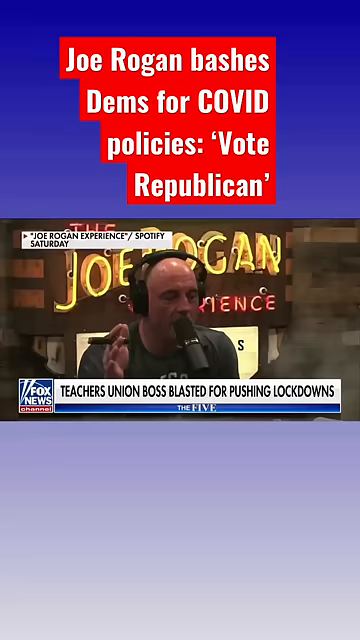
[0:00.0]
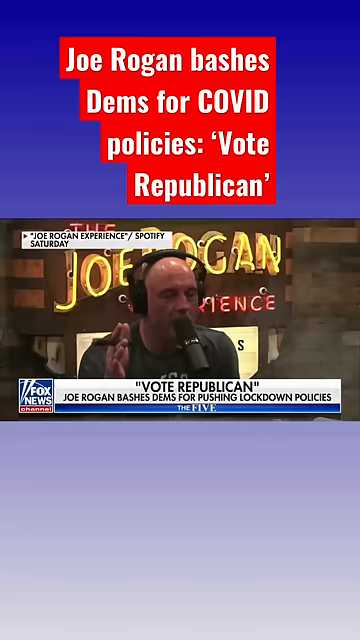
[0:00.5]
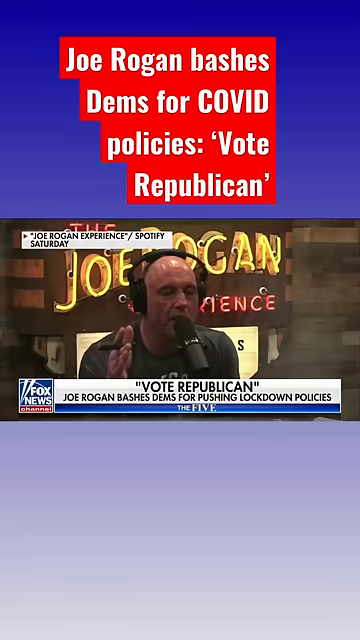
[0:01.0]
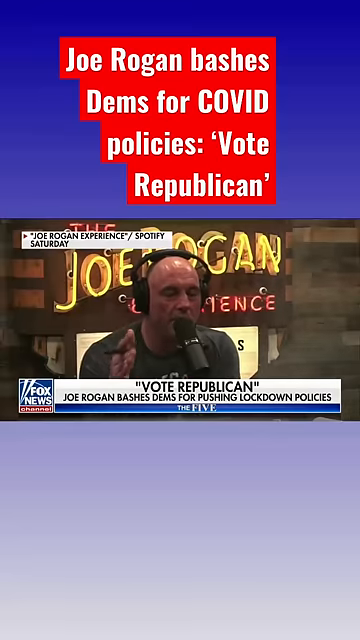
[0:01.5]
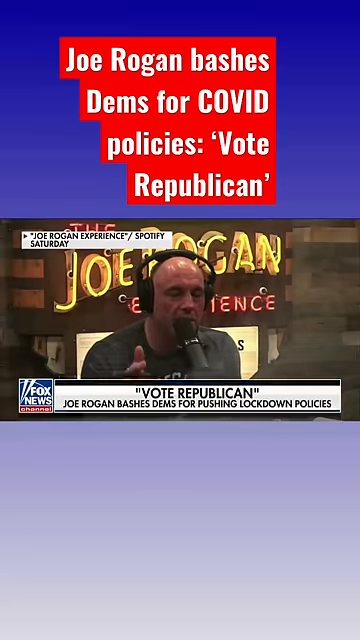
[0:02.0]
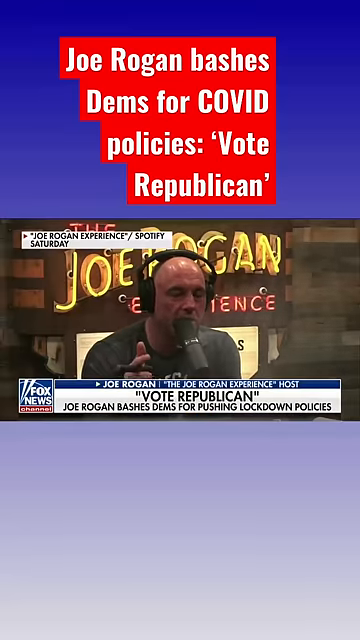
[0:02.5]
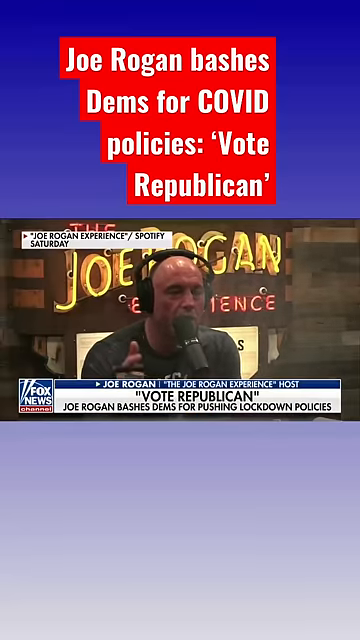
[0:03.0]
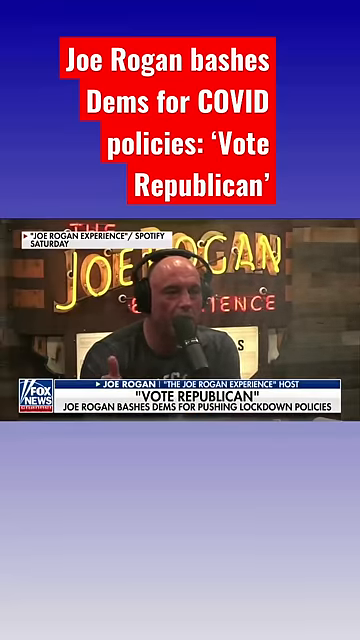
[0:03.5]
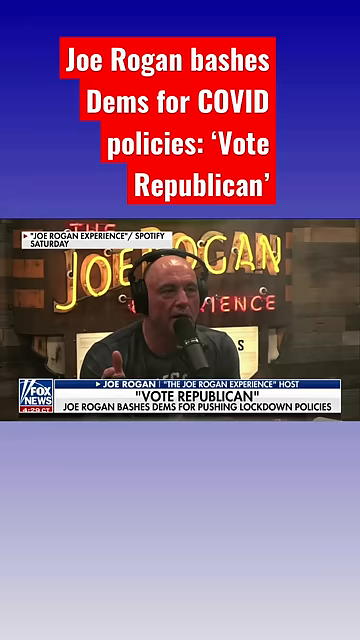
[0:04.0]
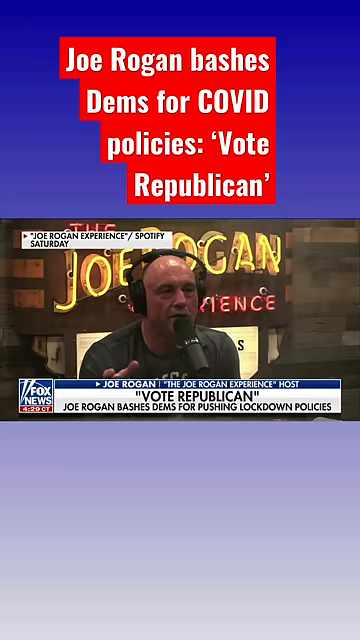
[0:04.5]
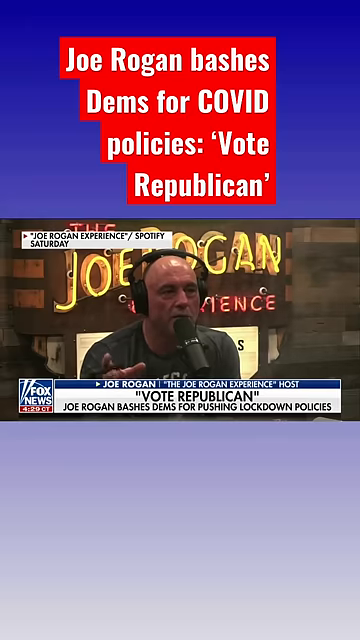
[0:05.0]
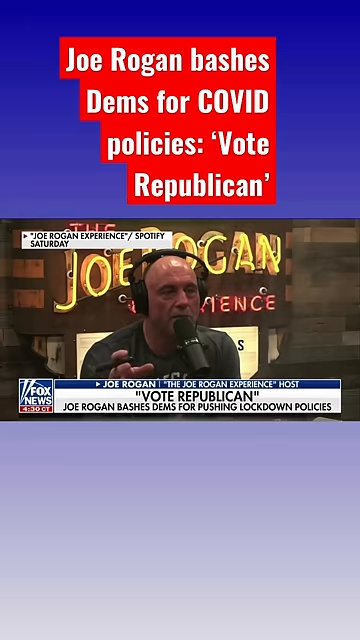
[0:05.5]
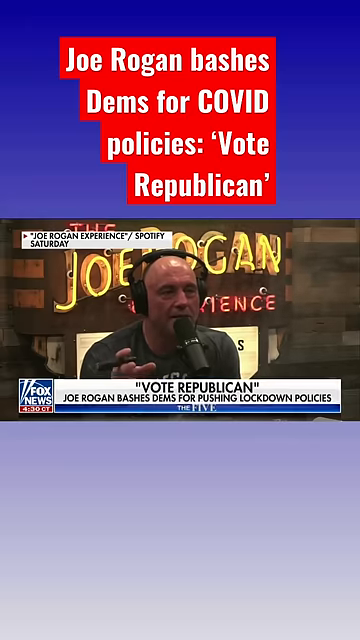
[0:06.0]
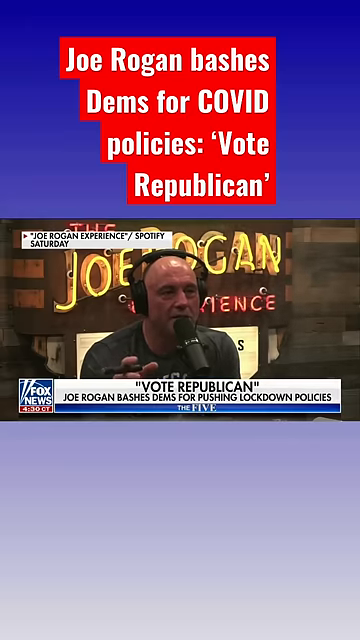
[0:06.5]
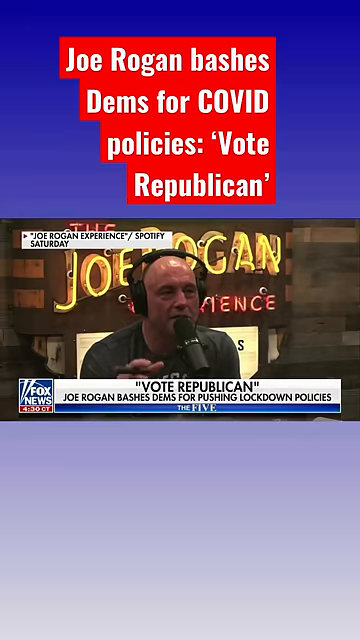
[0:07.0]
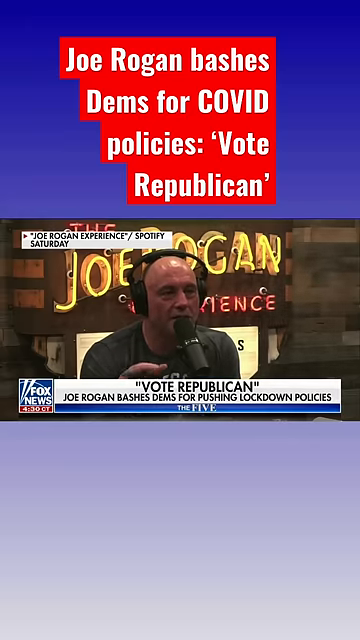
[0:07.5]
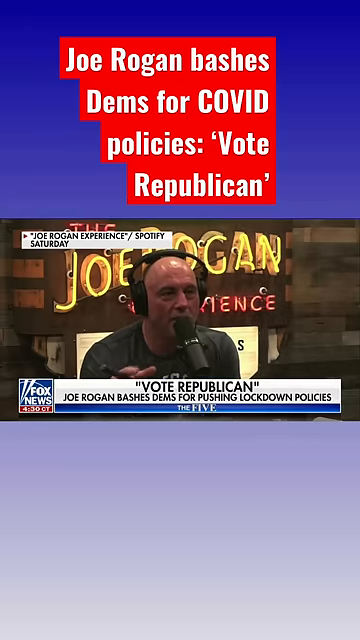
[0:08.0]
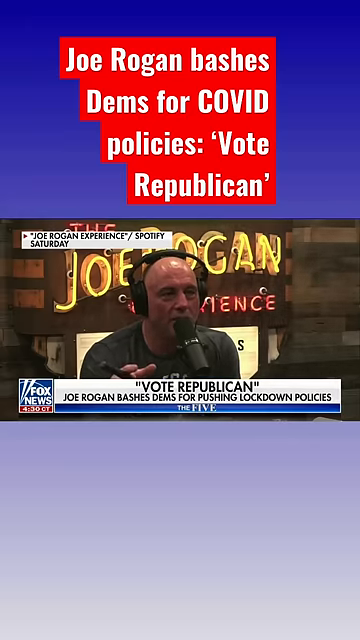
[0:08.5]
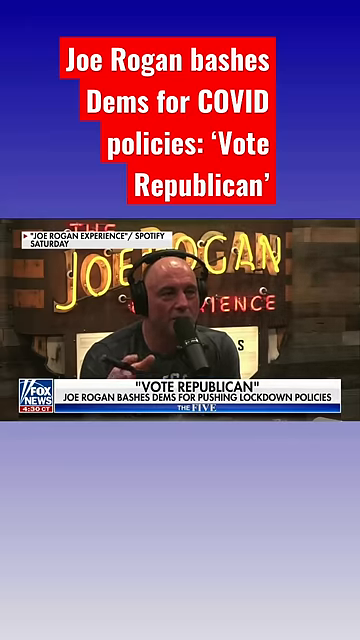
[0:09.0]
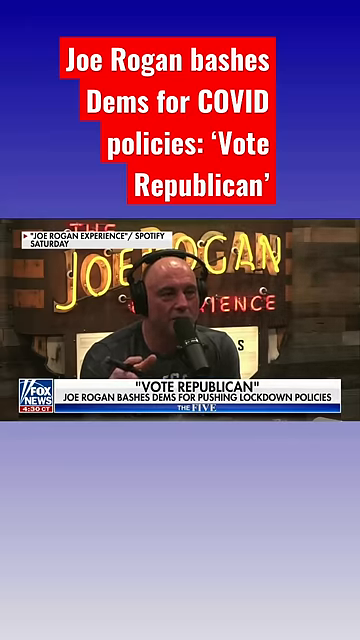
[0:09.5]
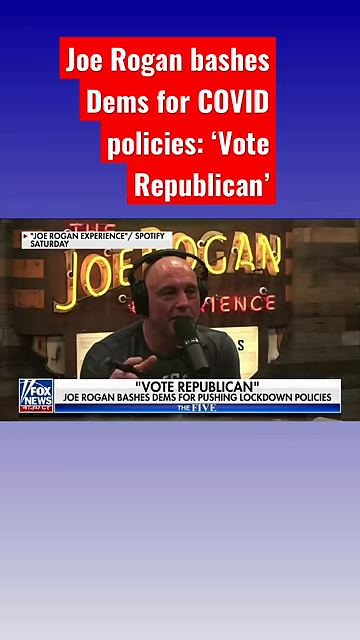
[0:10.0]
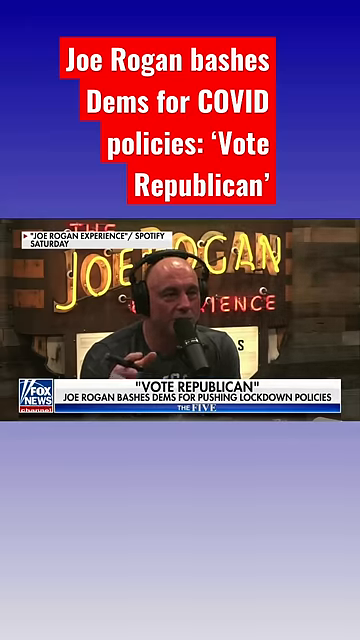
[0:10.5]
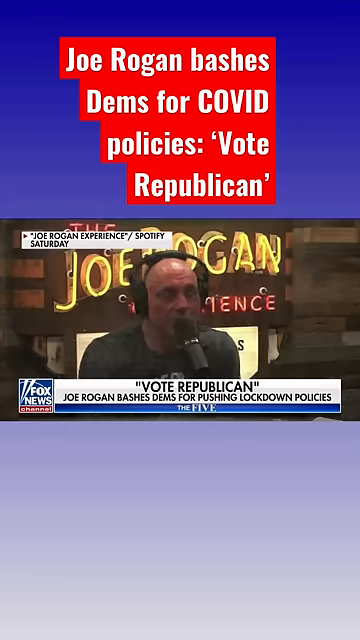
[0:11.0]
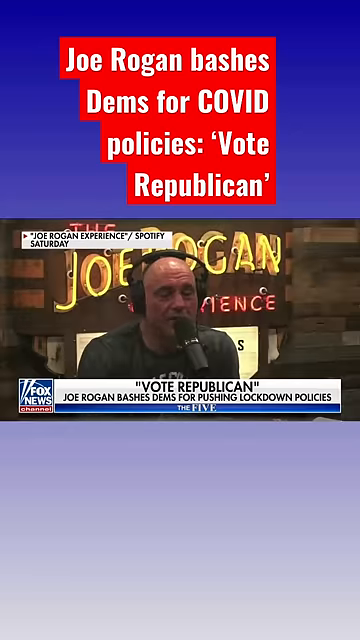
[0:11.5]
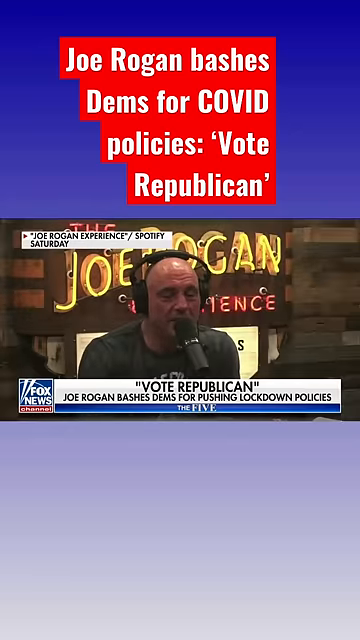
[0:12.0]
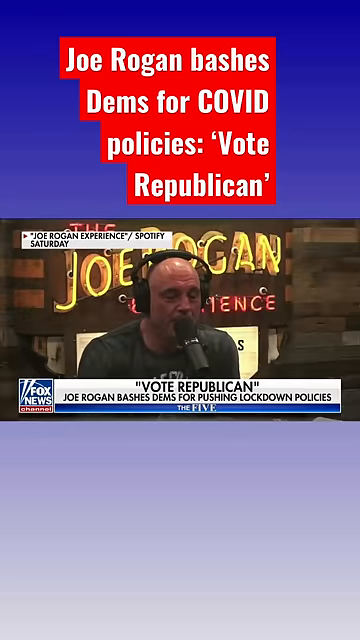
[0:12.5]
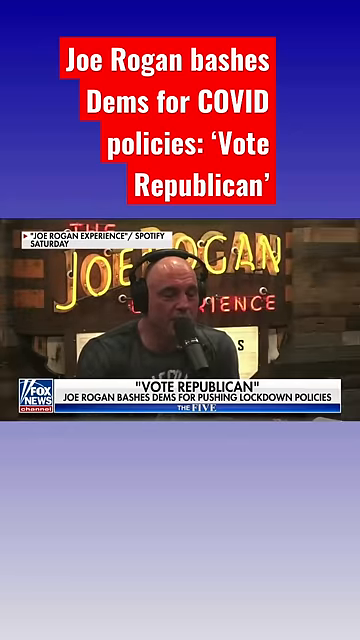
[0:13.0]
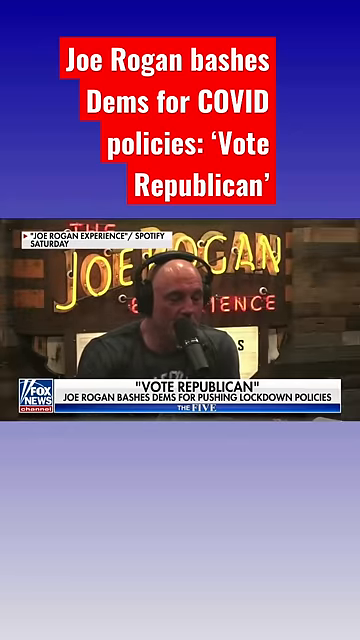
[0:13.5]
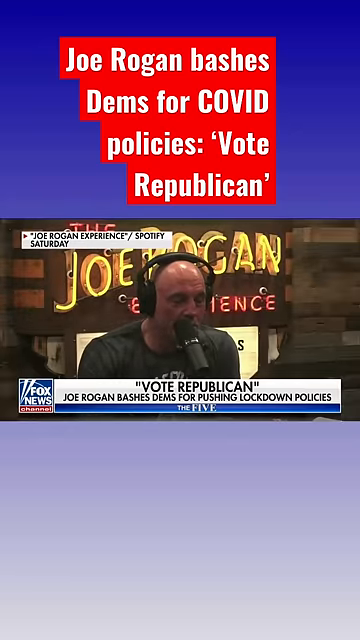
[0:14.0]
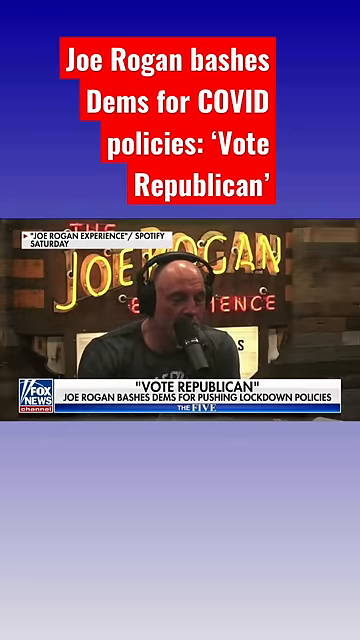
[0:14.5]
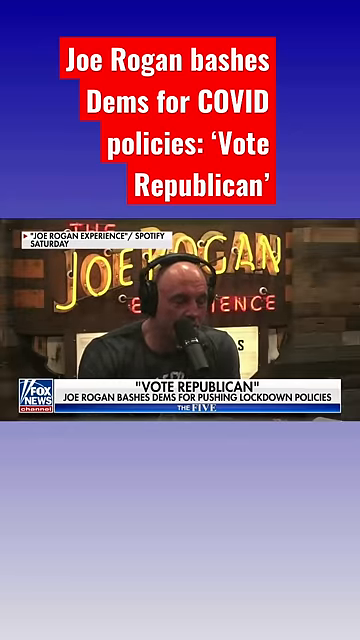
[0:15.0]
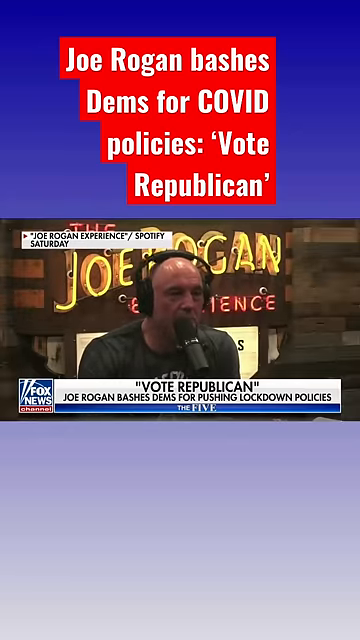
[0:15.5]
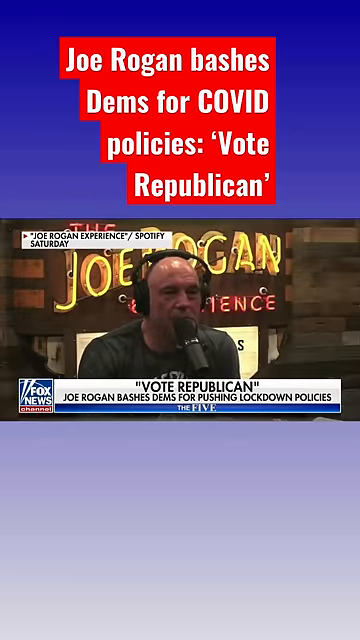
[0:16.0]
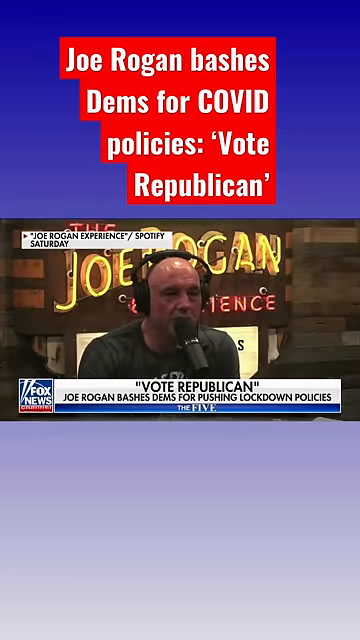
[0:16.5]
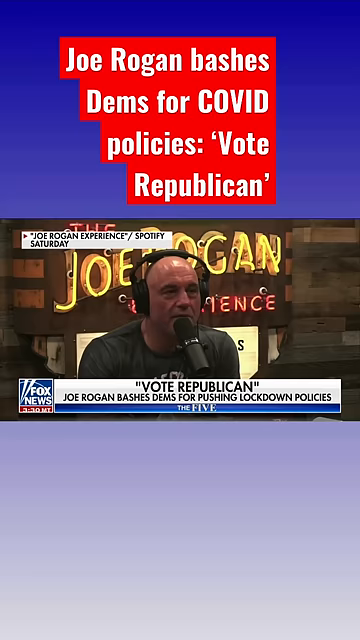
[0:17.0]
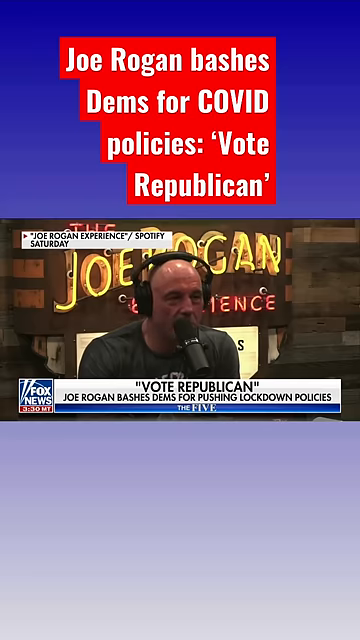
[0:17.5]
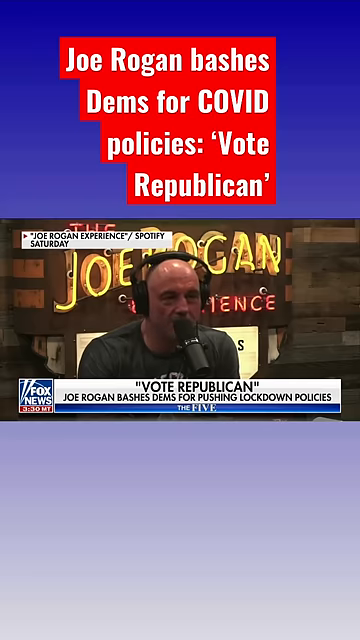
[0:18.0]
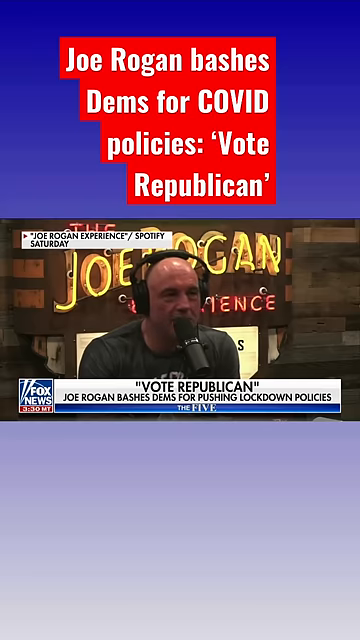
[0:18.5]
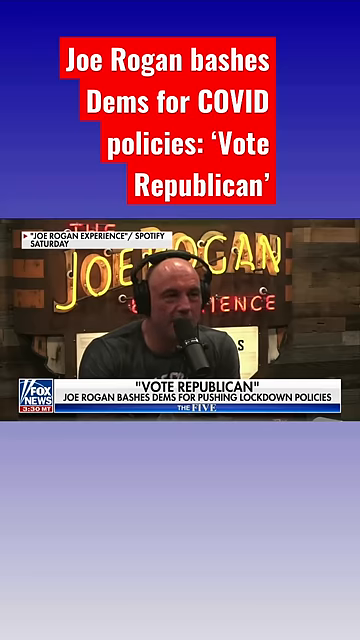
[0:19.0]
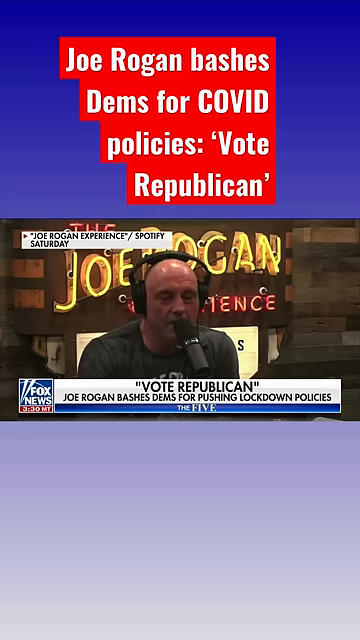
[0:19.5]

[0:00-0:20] The video centers on Joe Rogan and on Democrats being criticized for pushing lockdown policies, tied to COVID policy and to voting for Republicans.